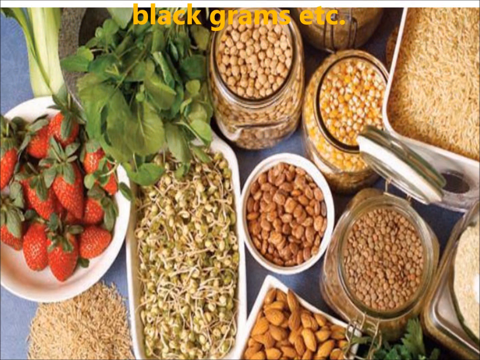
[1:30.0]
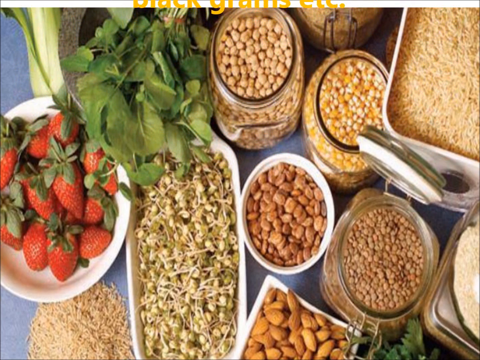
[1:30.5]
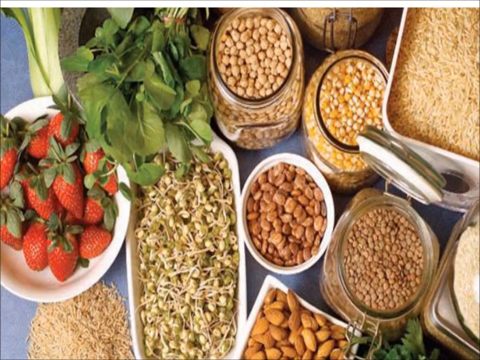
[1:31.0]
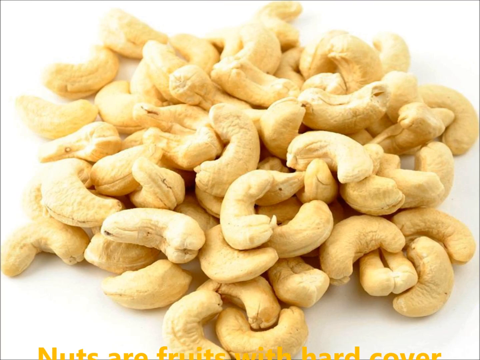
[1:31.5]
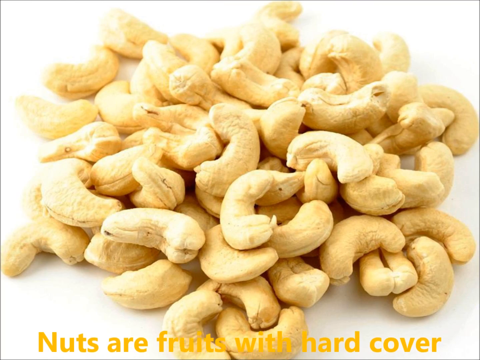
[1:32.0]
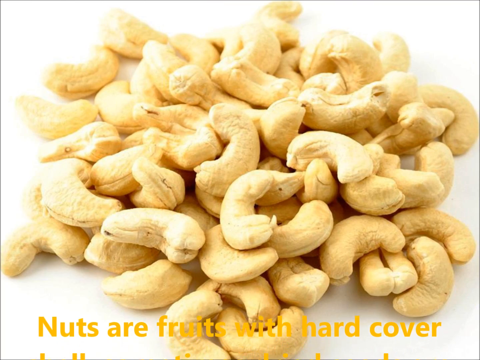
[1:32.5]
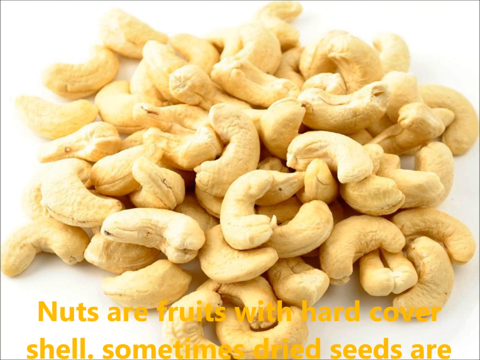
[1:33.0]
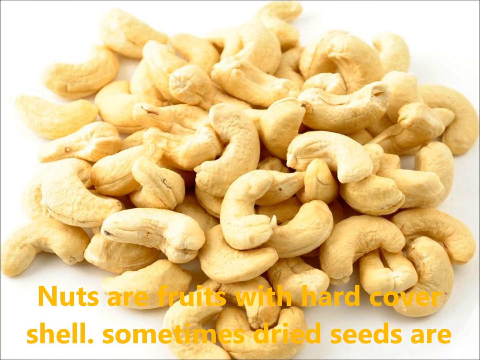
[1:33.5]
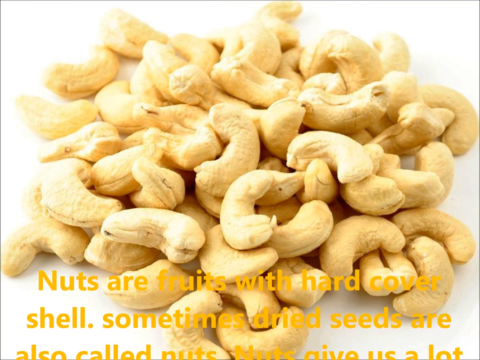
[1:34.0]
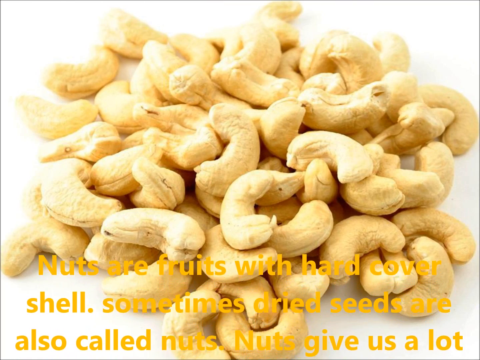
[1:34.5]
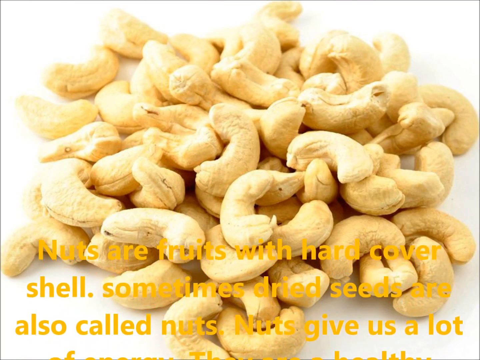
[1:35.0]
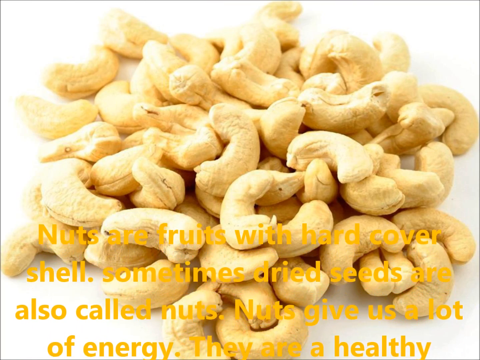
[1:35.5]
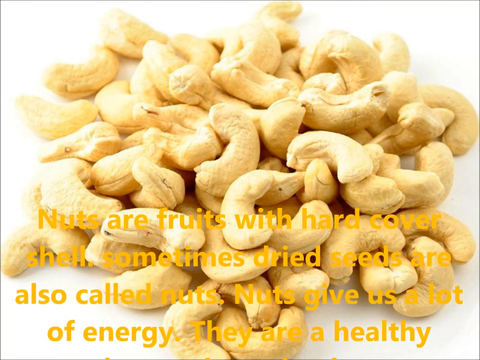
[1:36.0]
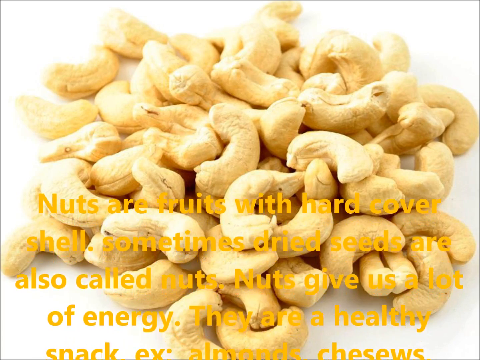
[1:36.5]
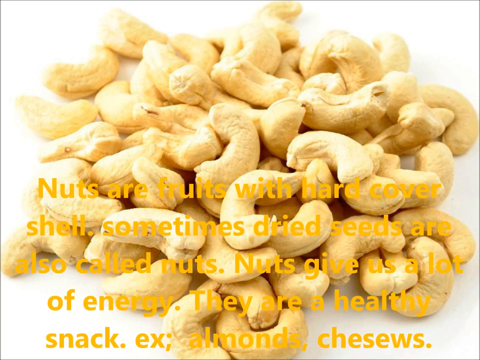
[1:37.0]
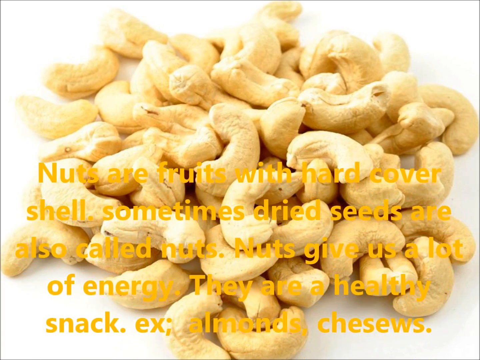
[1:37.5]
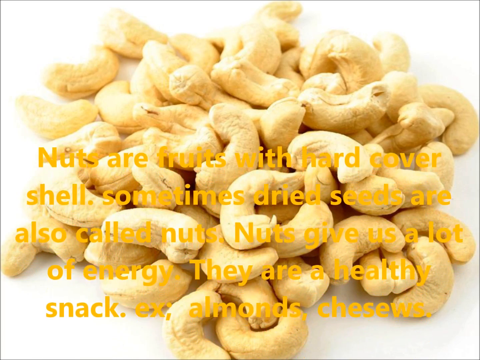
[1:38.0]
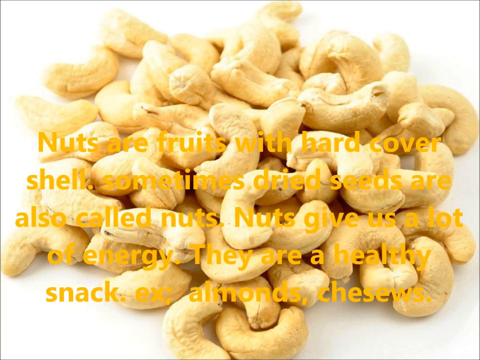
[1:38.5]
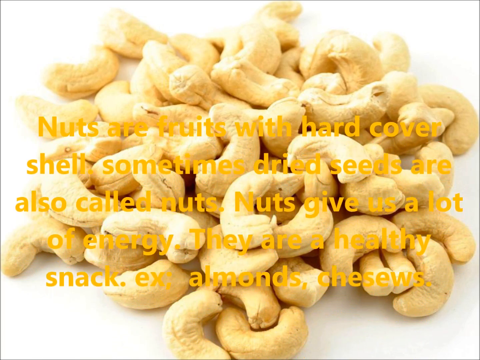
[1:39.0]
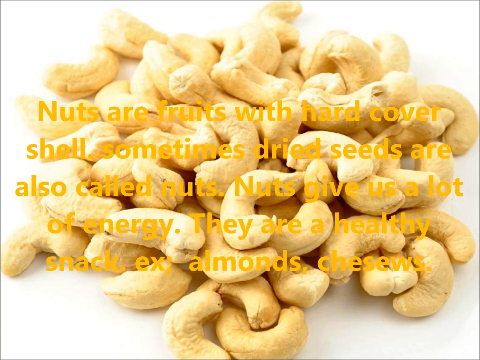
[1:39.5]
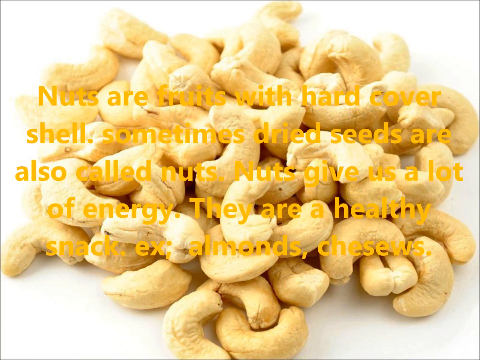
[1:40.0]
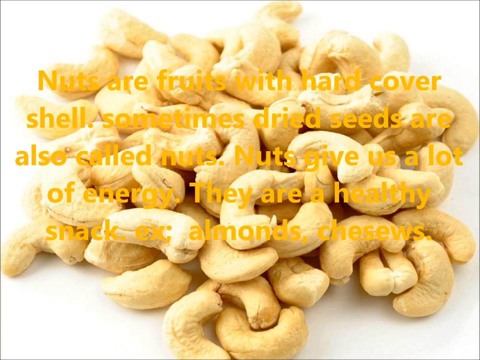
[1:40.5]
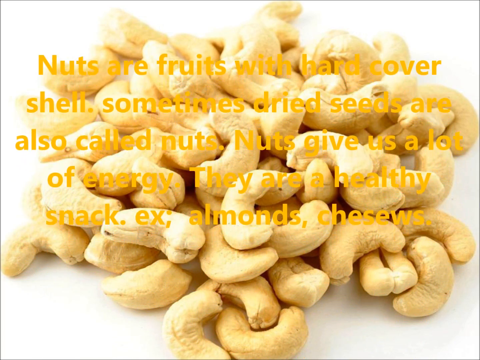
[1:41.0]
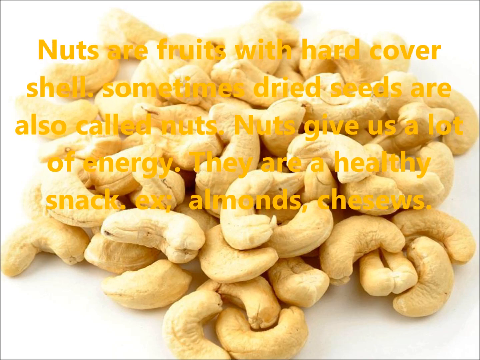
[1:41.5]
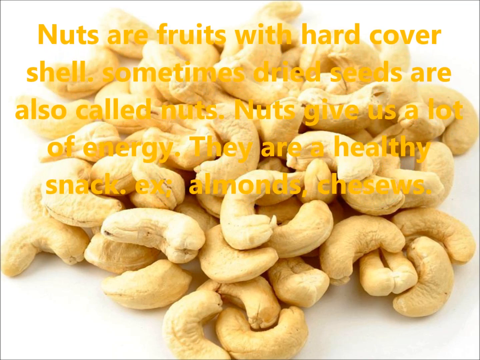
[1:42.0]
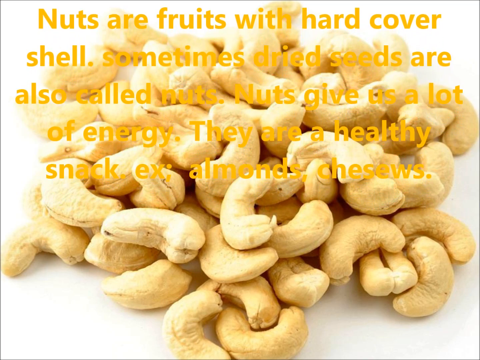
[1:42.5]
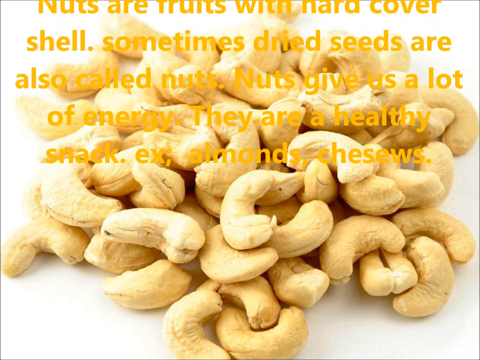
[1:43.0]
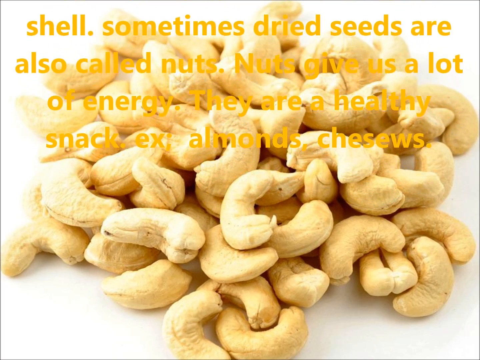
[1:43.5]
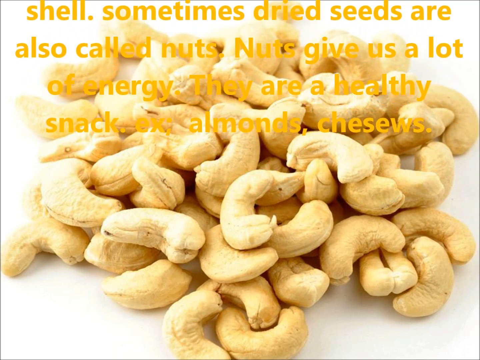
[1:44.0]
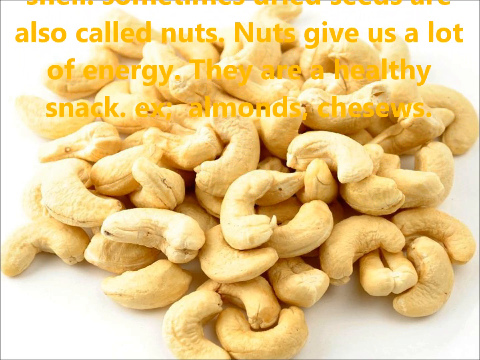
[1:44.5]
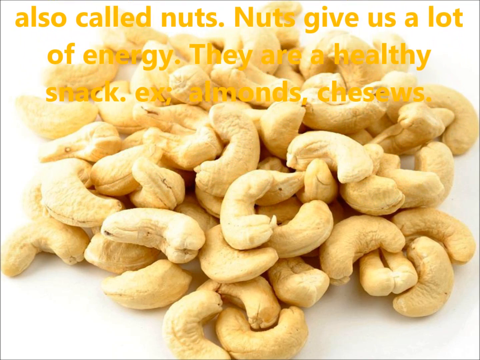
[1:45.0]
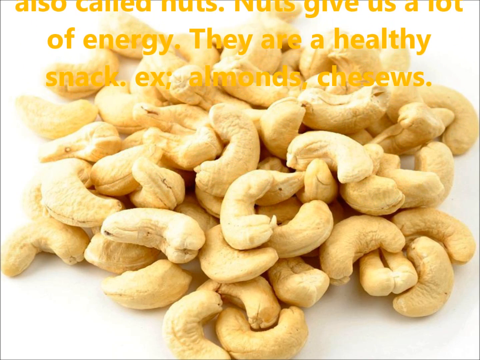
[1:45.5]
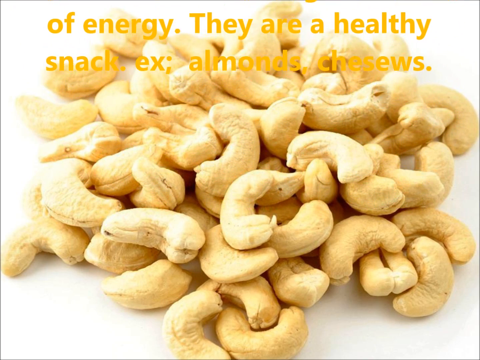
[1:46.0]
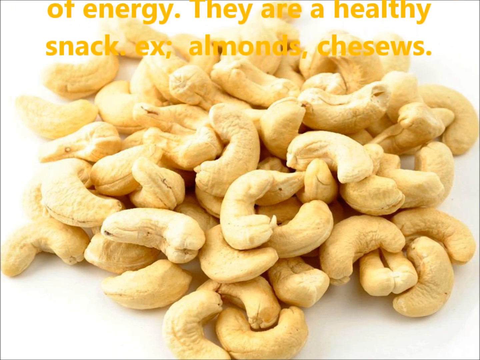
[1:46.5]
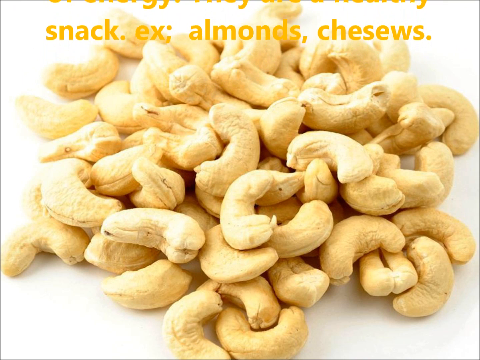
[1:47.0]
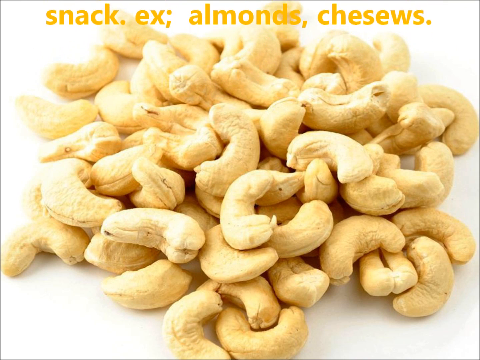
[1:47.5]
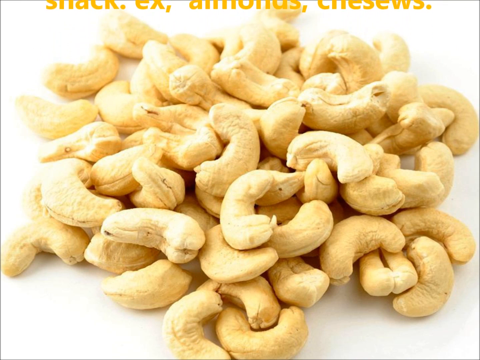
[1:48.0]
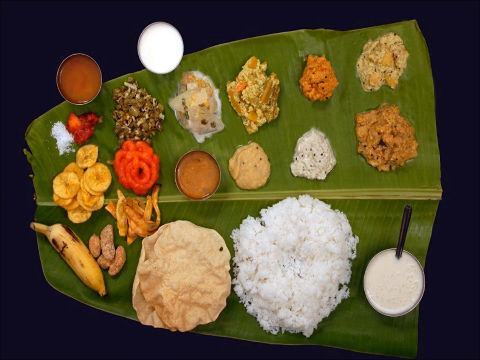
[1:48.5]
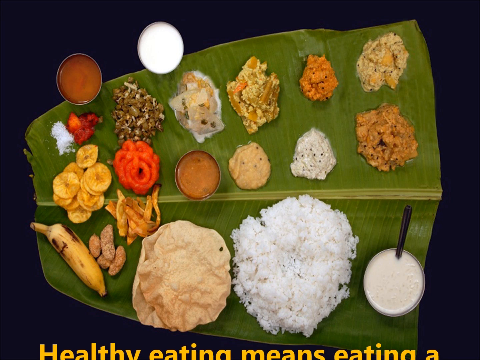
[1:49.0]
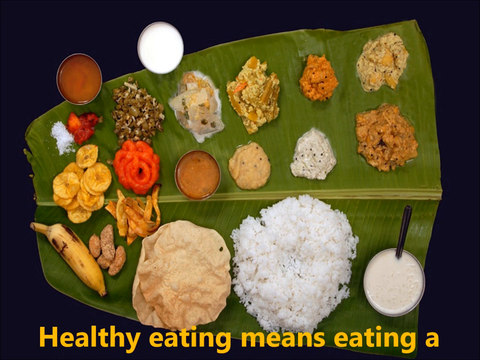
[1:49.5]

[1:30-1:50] A picture shows a bunch of what appear to be peanuts or nuts, and facts about nuts pop up on the screen on top of it: that nuts are fruits with hard cover shells, that sometimes the seeds are also called nuts, that nuts give you a lot of energy, and that they are a healthy snack, with examples such as almonds and cashews. The video then transitions to another shot showing a bunch of different fruits for a quick second; the fruits are unidentified because it cuts off before they can be seen clearly.